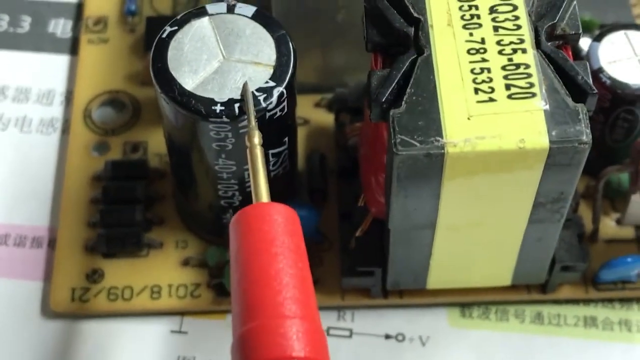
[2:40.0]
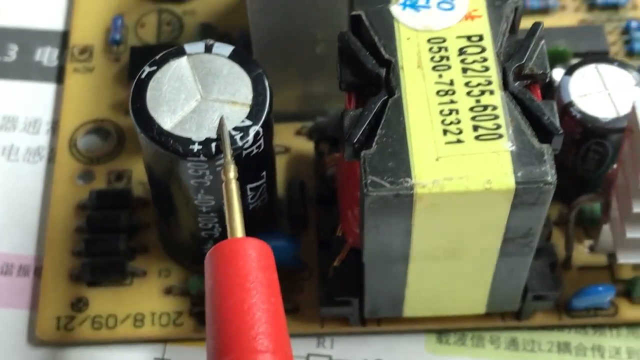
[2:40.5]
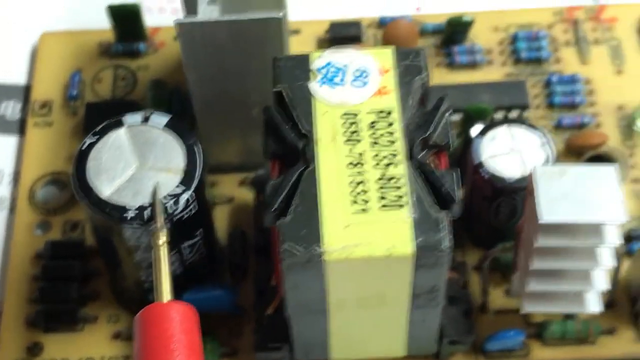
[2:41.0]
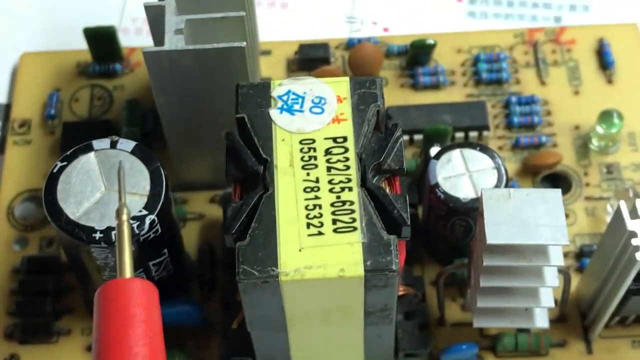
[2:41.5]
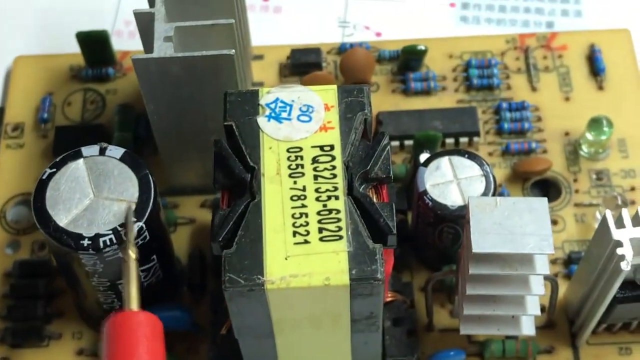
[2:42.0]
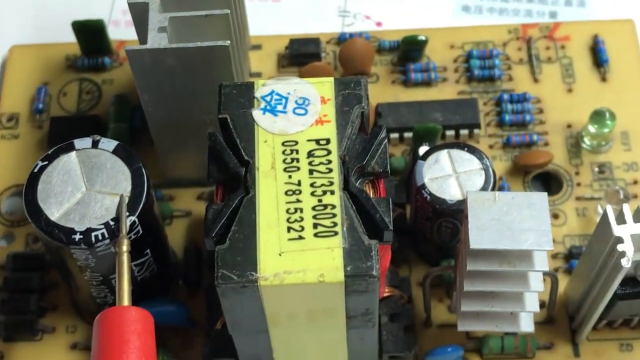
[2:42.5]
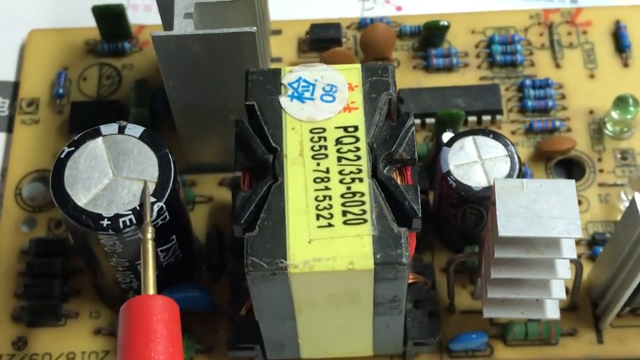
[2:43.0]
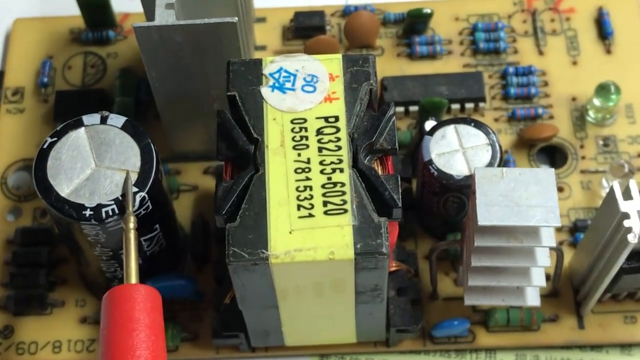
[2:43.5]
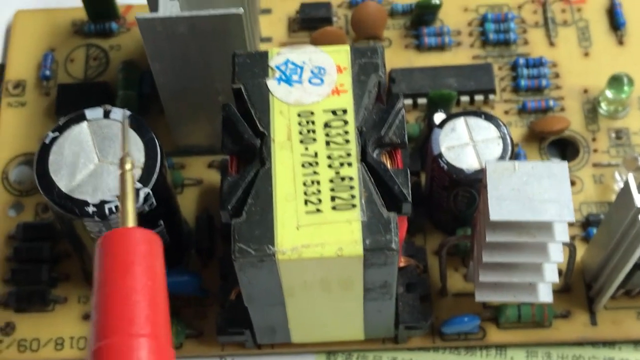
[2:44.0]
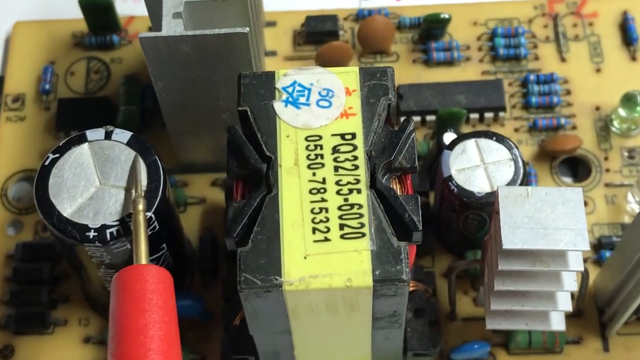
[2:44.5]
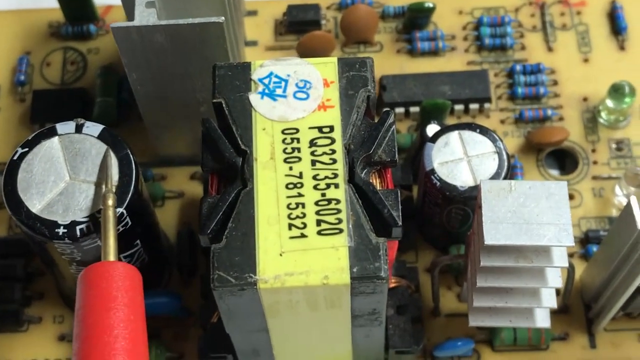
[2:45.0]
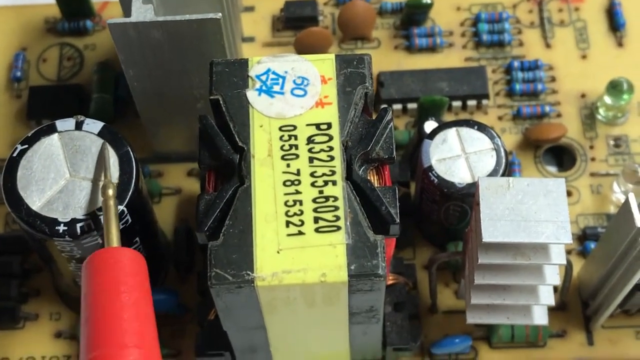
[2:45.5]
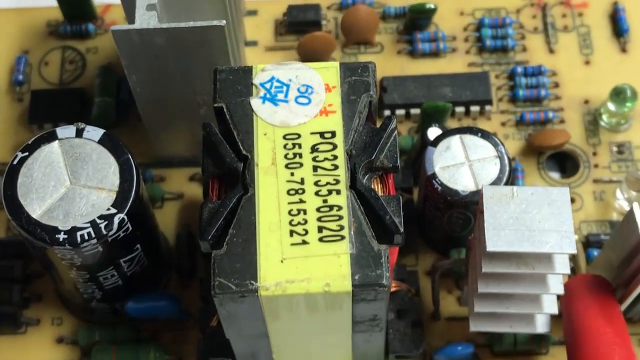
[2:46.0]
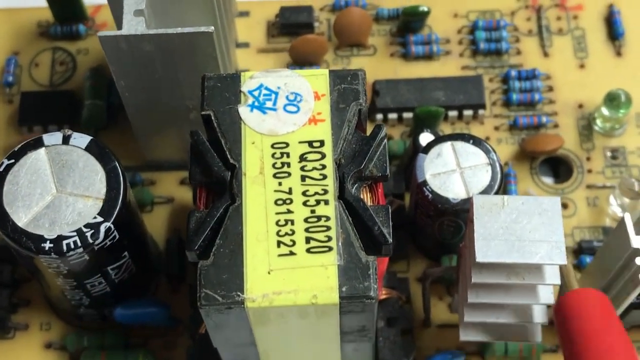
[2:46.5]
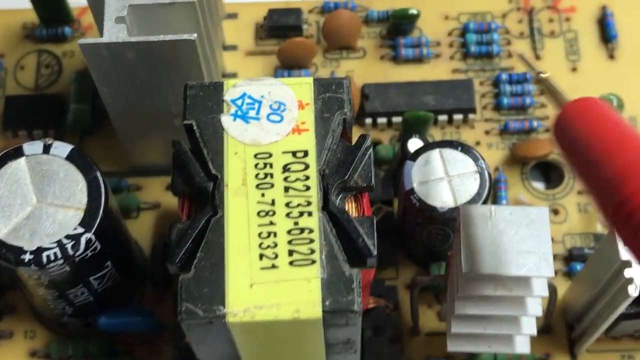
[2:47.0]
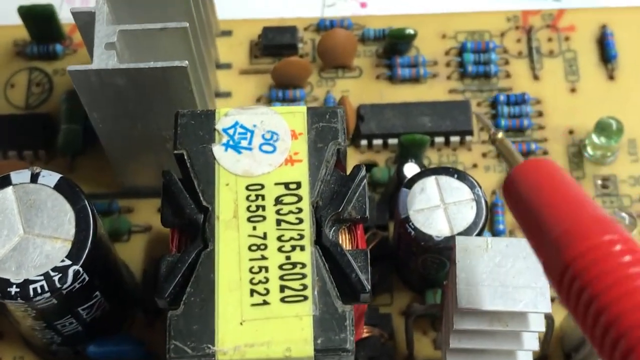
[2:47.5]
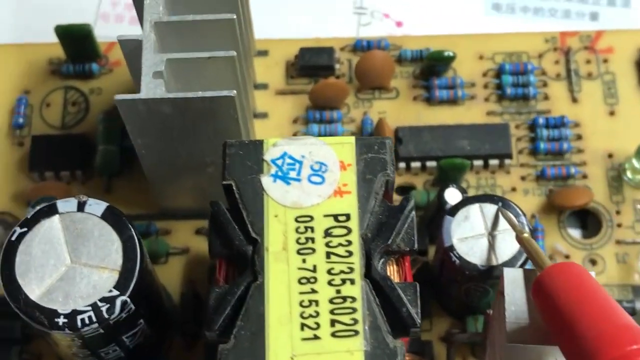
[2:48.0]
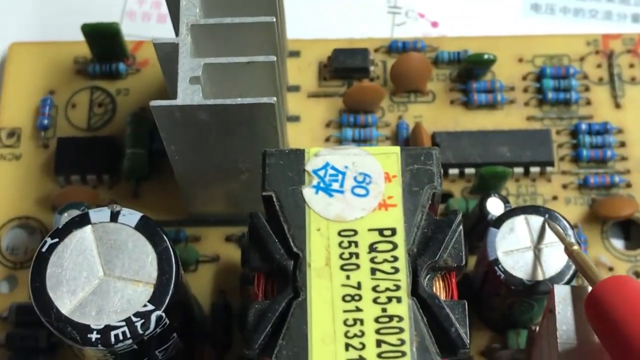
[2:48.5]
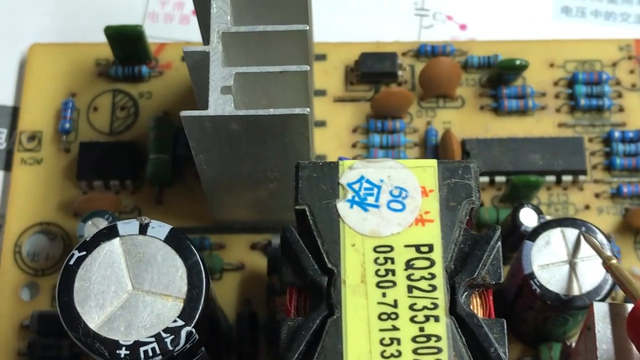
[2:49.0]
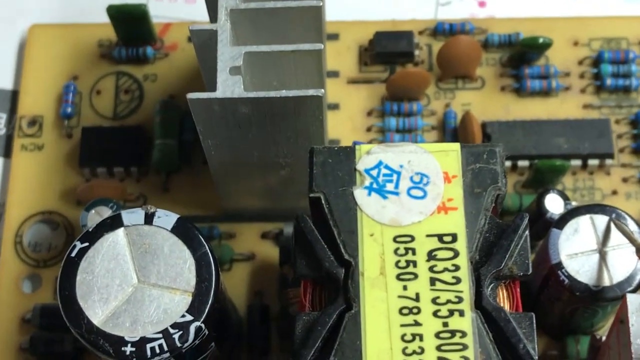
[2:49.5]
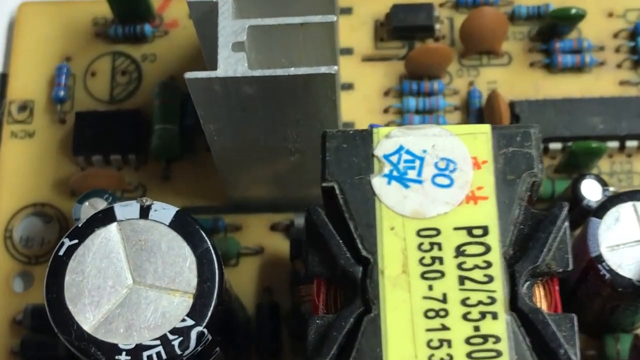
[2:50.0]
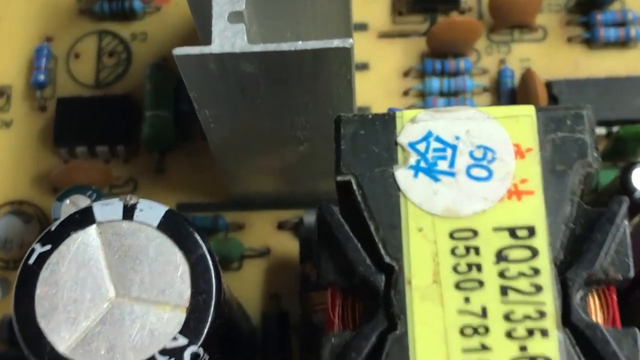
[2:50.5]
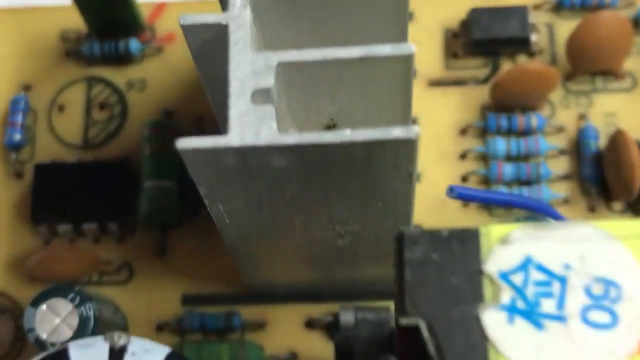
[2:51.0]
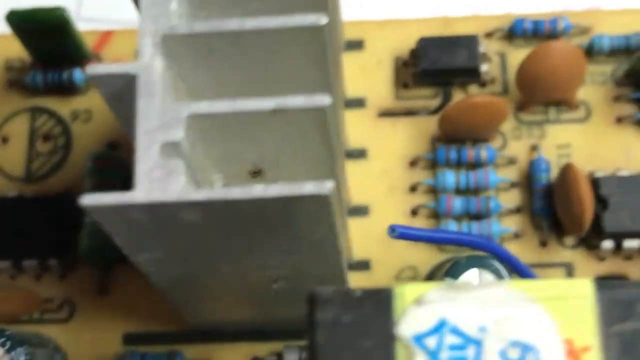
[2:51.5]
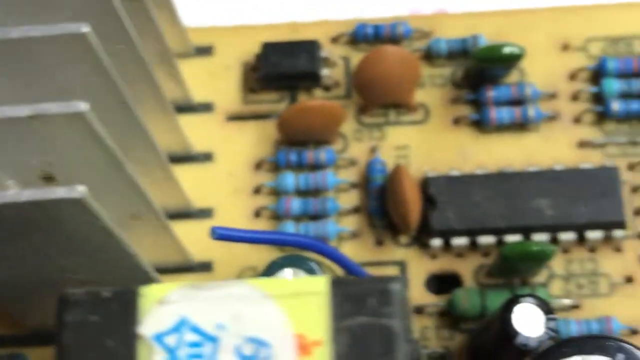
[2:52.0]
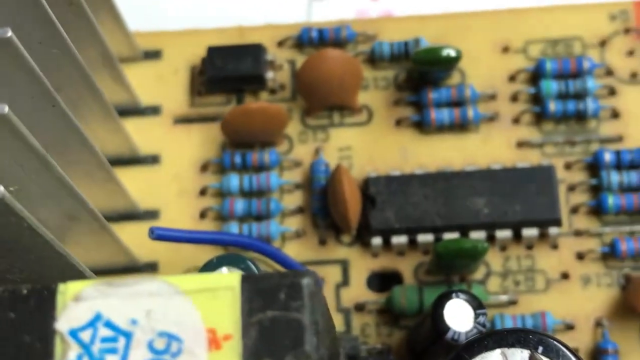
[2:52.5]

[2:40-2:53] A yellow or orange circuit board holds a bunch of circuits of different shapes and colors. Some are more cylindrical and blue, and some look more golden and round. There are also some kind of cylindrical batteries that are silver on the top with black wrapping around them. A black object in the middle has a yellow sort of label with letters and numbers on it, plus a white sticker that says "60" with some other character in blue. A pointer, golden at the tip with a red sort of base, points to something on the board. The camera then zooms in towards the board for a very close-up shot of some of the components, including a thing that looks like a sort of metal fan, with several blades coming out of multiple black holes on the board.